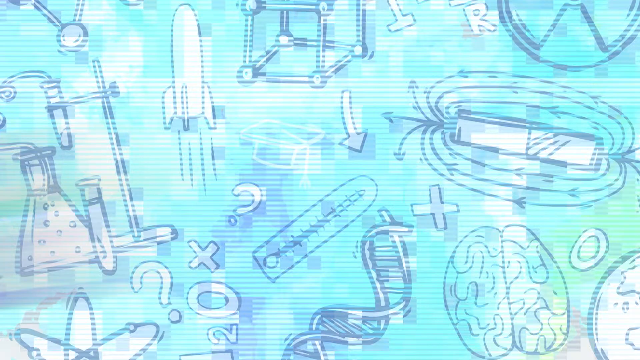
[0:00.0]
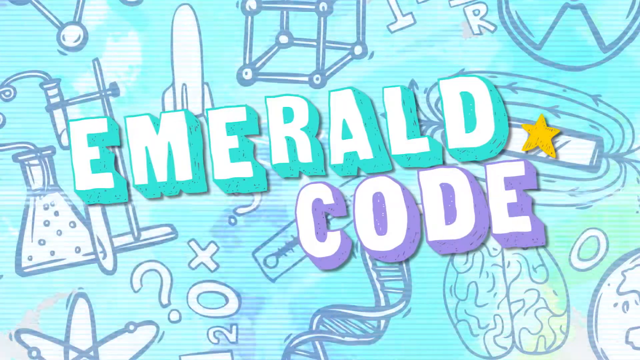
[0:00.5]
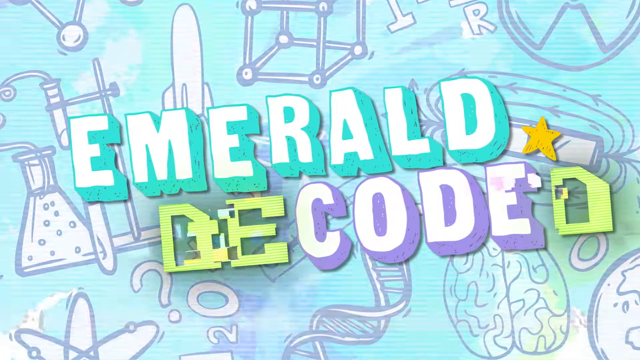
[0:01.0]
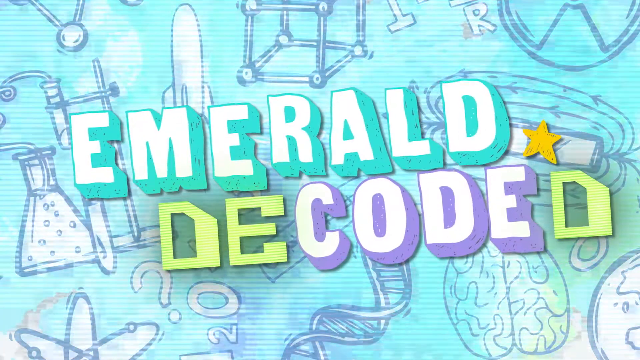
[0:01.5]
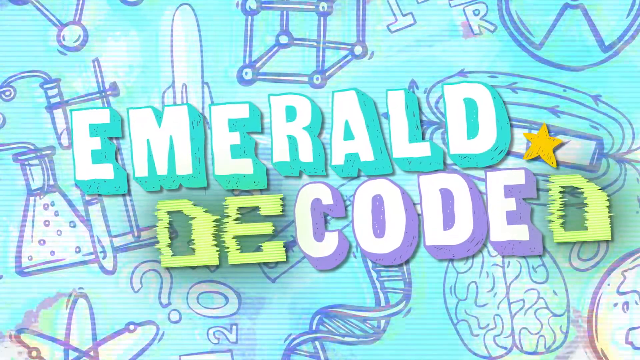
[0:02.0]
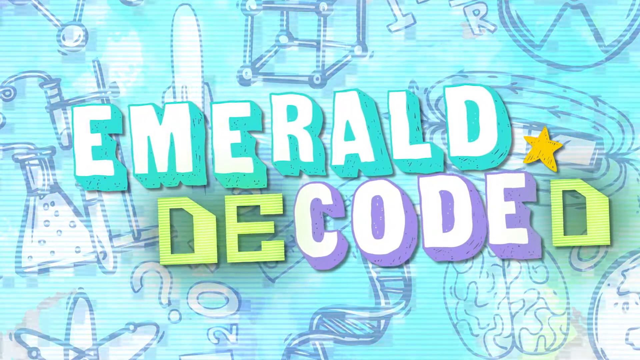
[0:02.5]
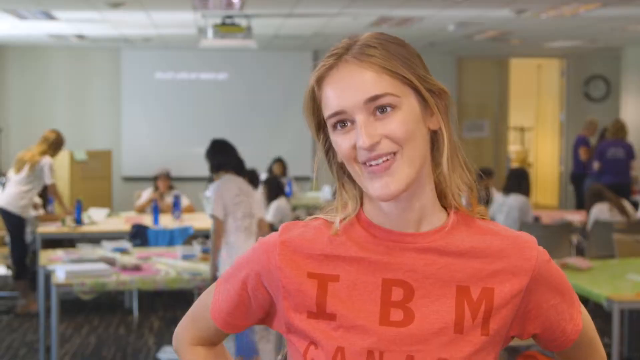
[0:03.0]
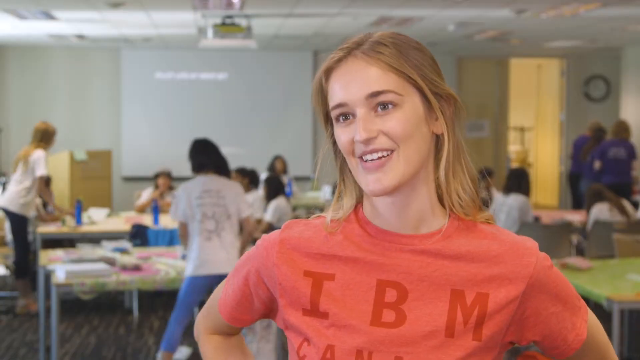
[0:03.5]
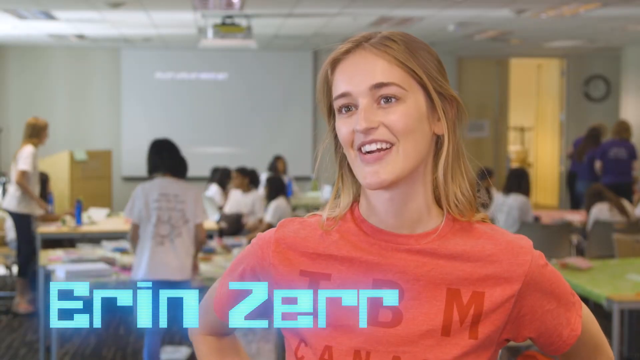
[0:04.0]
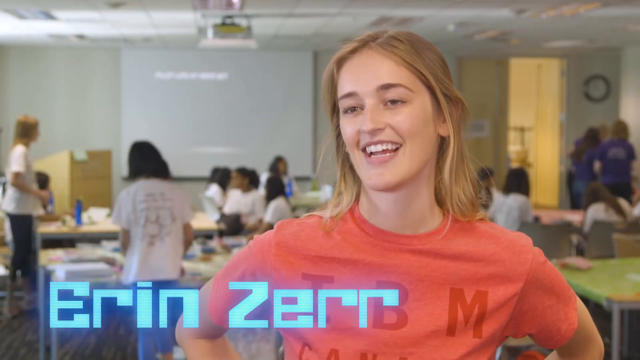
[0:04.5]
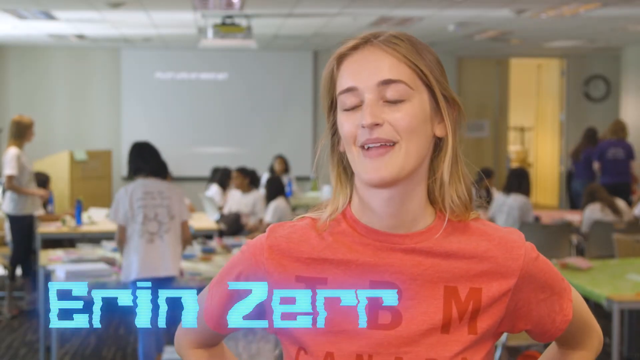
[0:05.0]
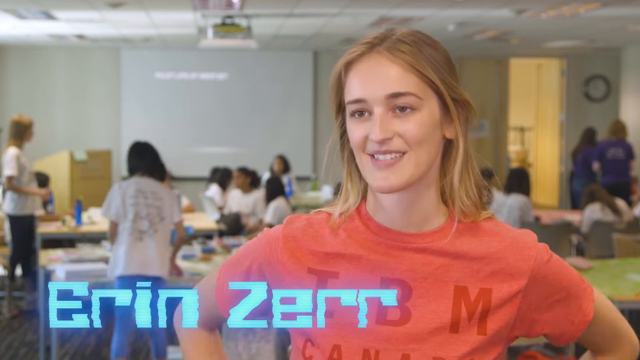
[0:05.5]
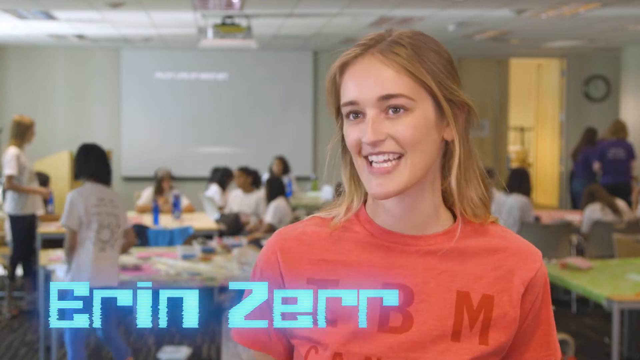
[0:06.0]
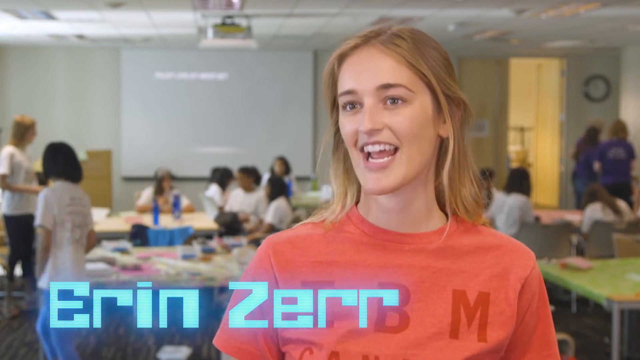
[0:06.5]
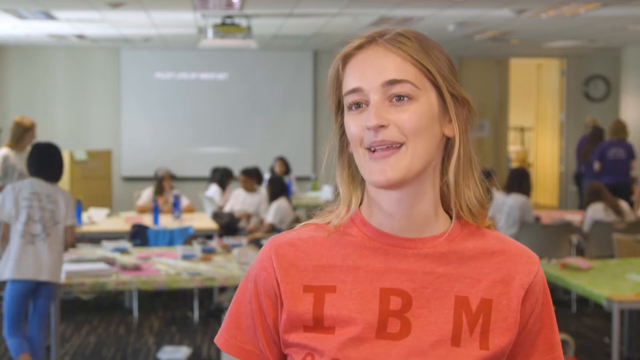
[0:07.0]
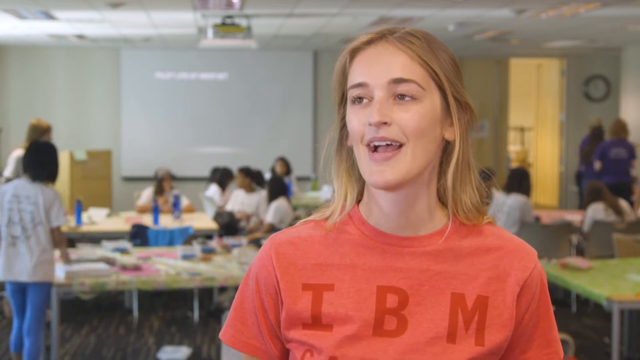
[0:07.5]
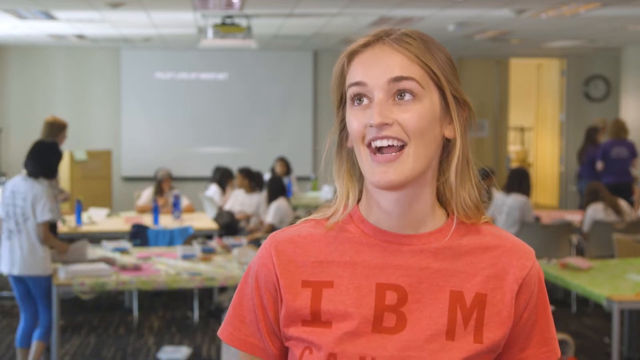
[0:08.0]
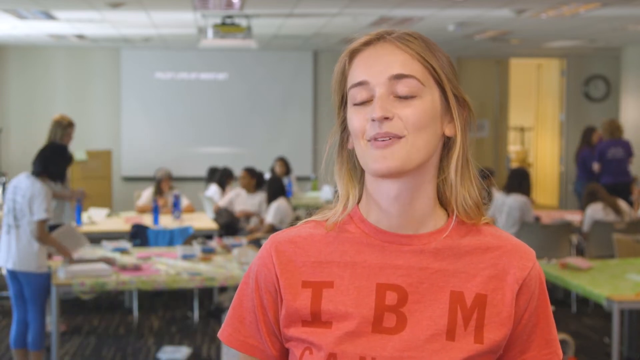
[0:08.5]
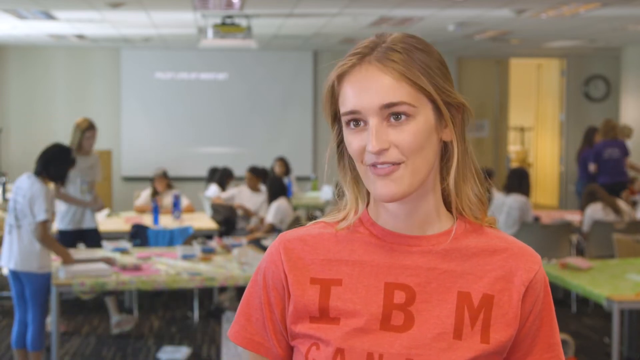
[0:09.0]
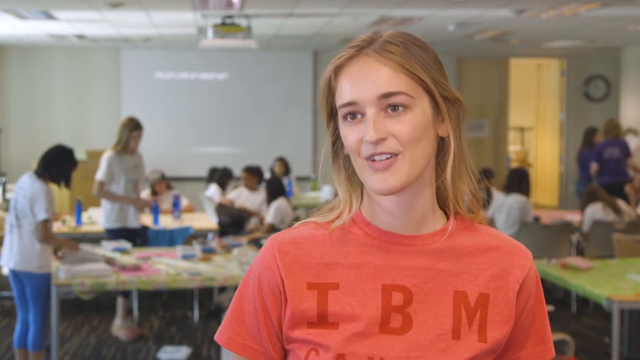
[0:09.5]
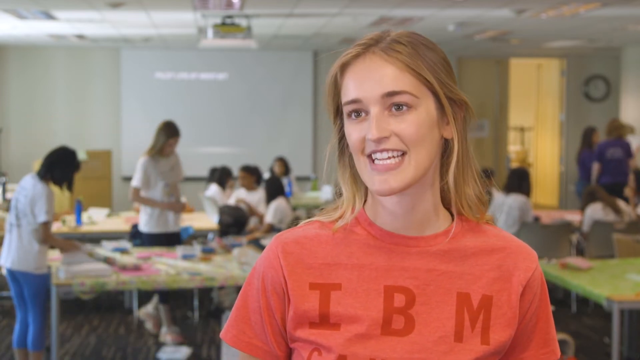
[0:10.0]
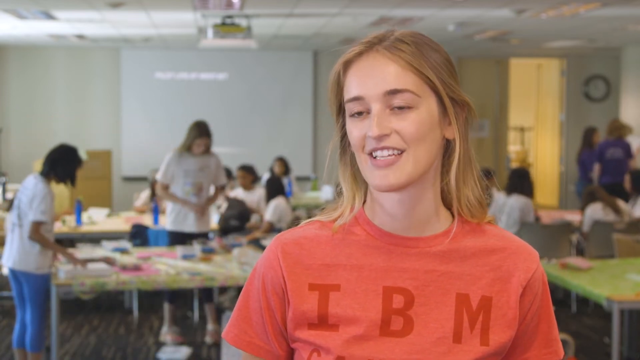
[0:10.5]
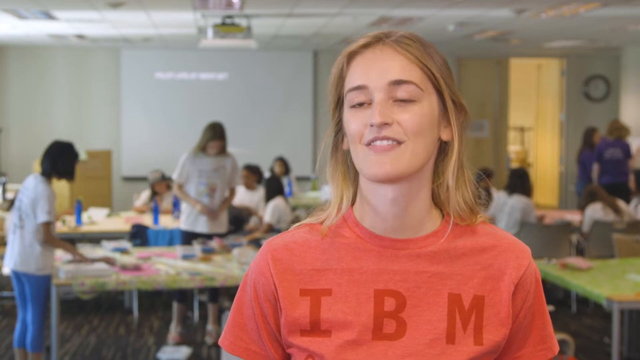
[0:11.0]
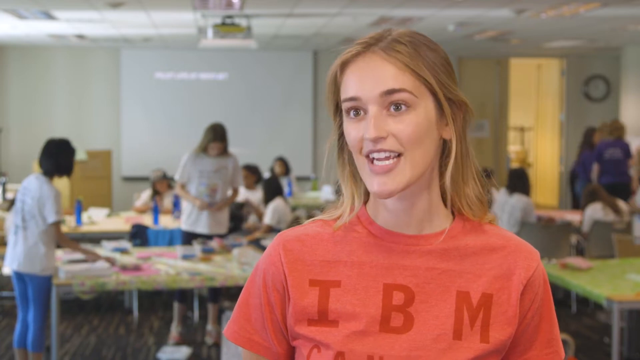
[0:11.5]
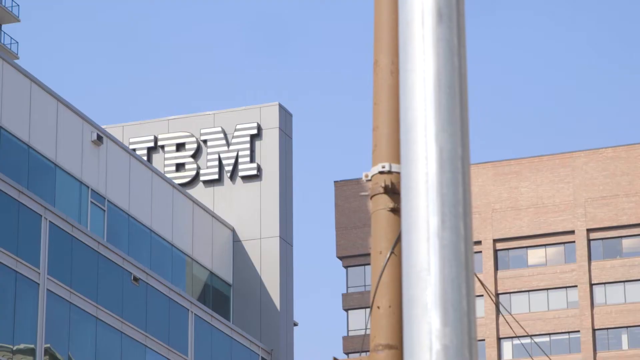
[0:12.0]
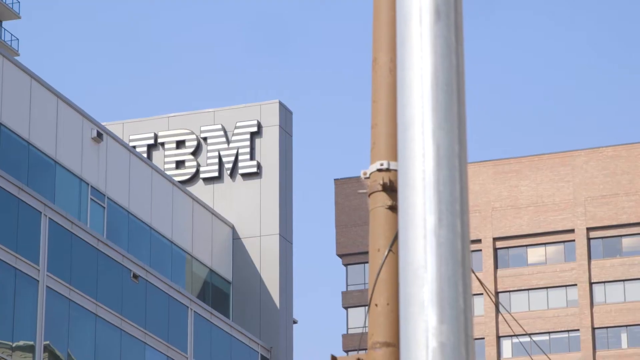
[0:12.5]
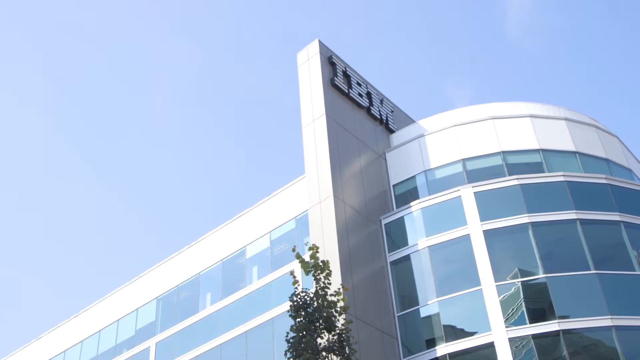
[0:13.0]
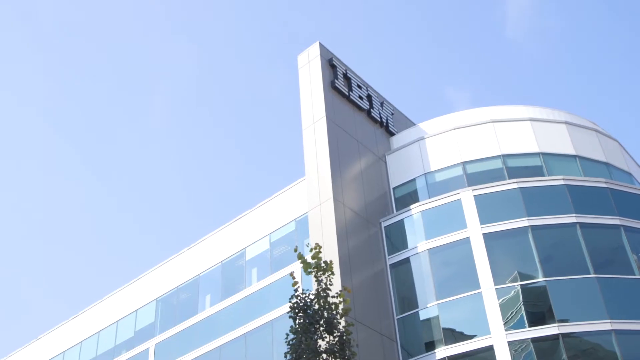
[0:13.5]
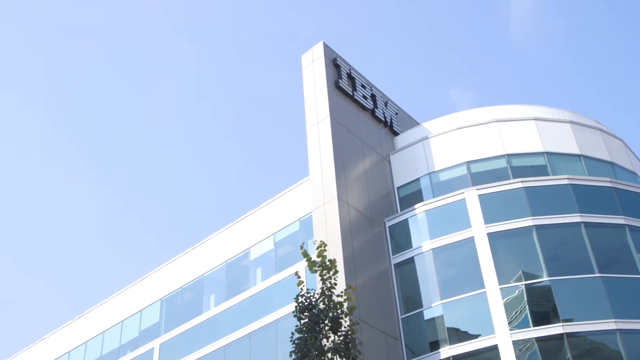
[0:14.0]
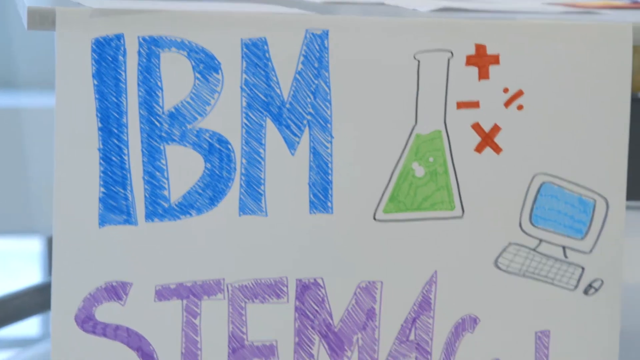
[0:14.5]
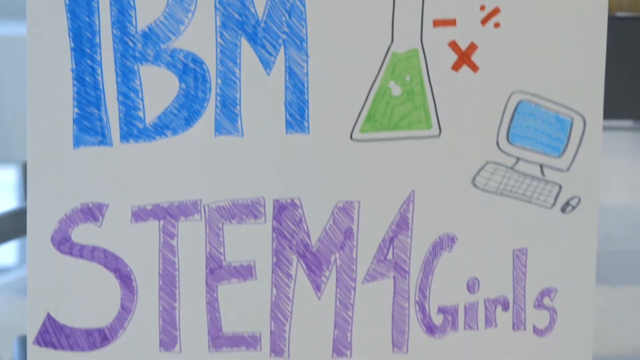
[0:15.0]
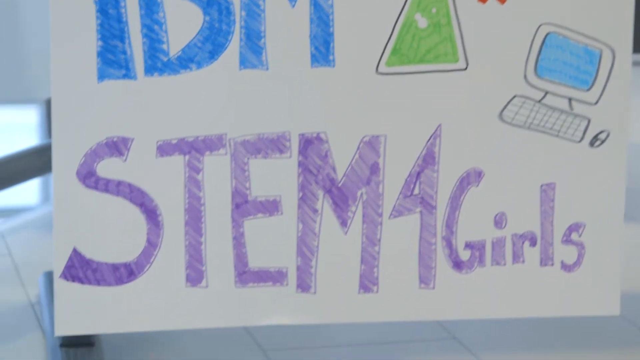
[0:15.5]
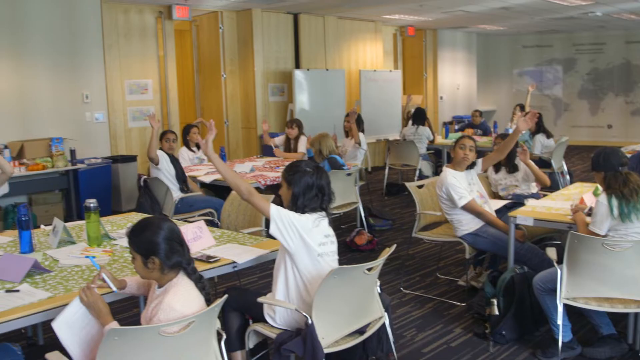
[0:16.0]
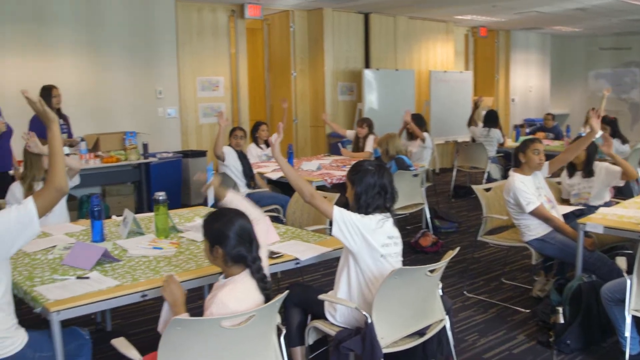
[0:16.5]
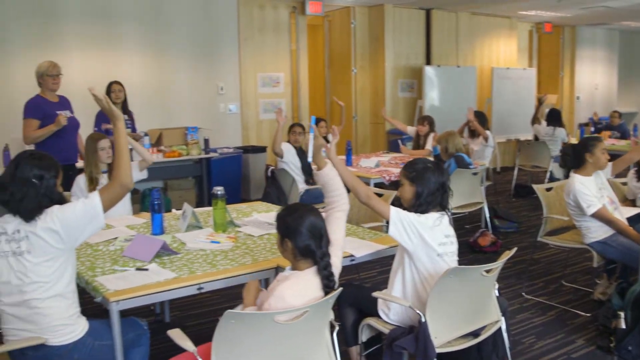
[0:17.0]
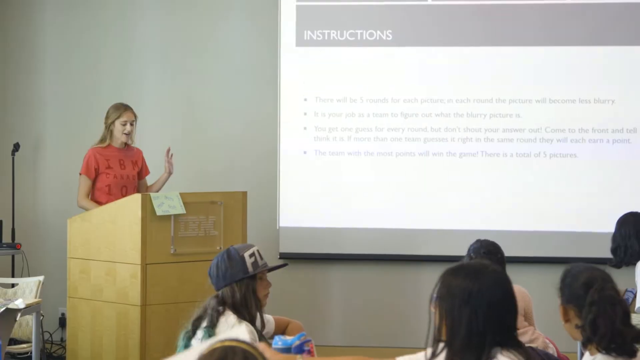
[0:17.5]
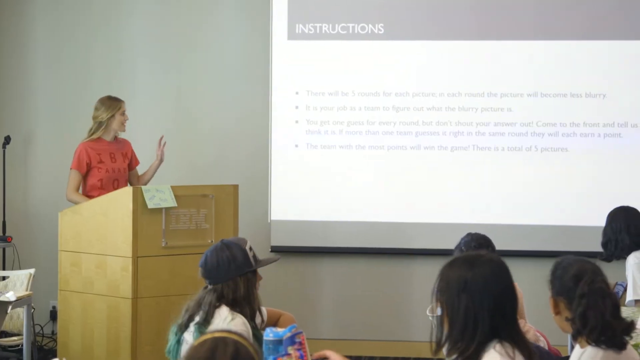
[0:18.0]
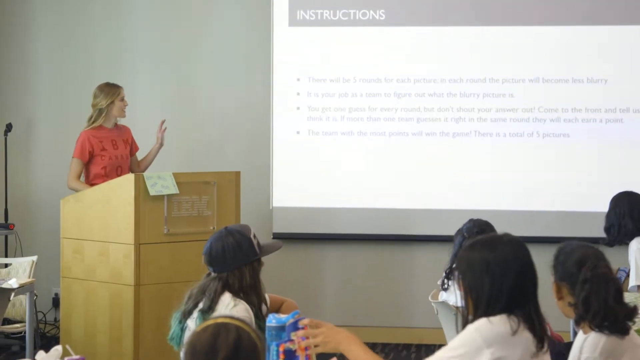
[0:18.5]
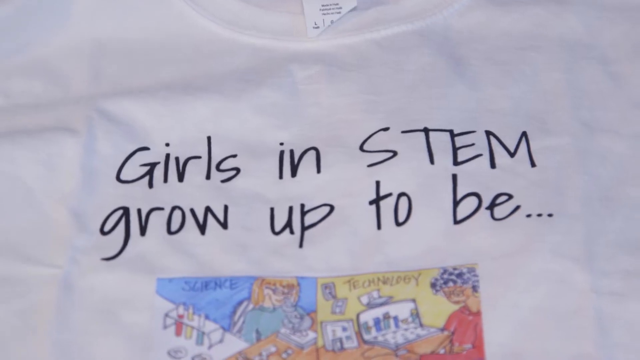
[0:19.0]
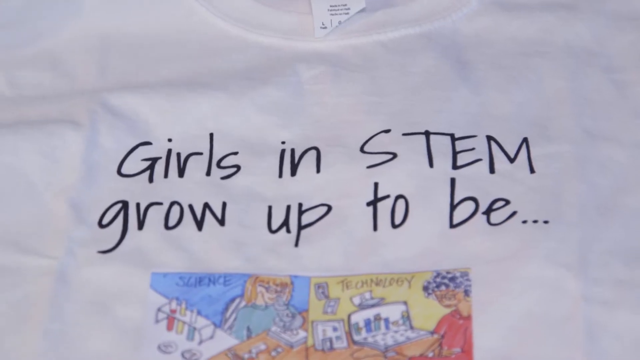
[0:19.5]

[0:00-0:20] A light blue drawn picture shows a rocket ship, beakers, test tubes, burners, a double helix DNA strand, a plus sign, some arrows and other items. The video is called Emerald Decode by Erin Zurr. A young white woman in her twenties with brown eyes and blonde hair wears a salmon-colored t-shirt that says "IBM." She is in an elementary-type classroom where kids are around rectangle and round tables with supplies on them, as if they are doing experiments or arts and crafts. The outside of the IBM building is shown, with a sign that says "IBM STEM for girls." This appears to also be on some white t-shirts that say "girls in STEM grow up to be," followed by a picture and drawing about science and technology. The video then goes back to the light blue pencil drawing of rocket ships, test tubes and beakers.